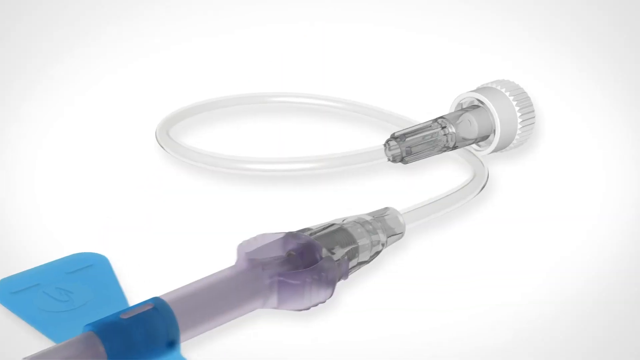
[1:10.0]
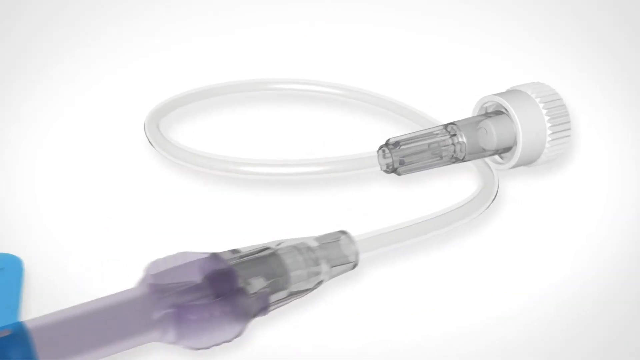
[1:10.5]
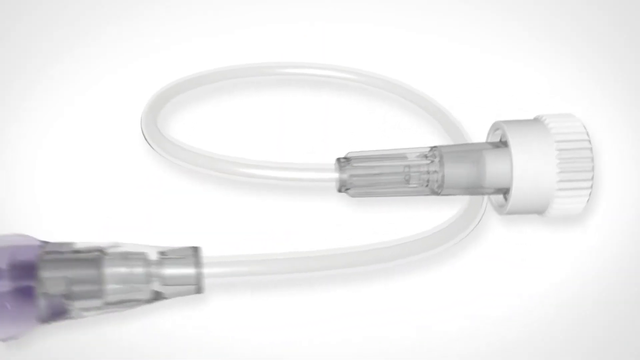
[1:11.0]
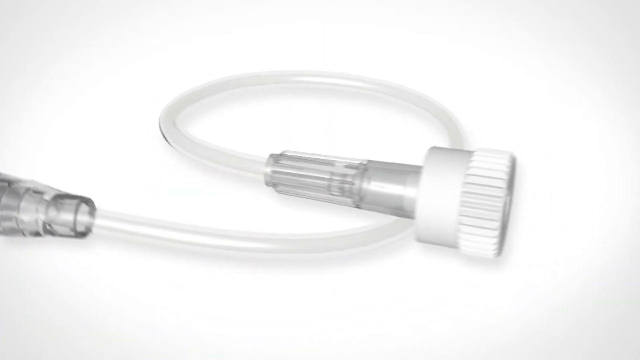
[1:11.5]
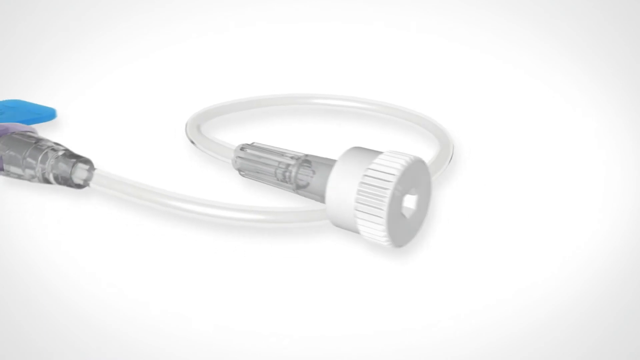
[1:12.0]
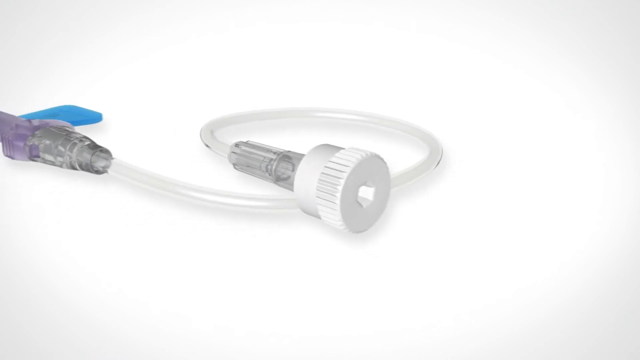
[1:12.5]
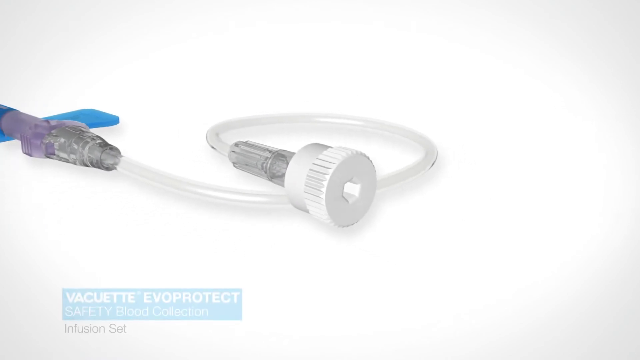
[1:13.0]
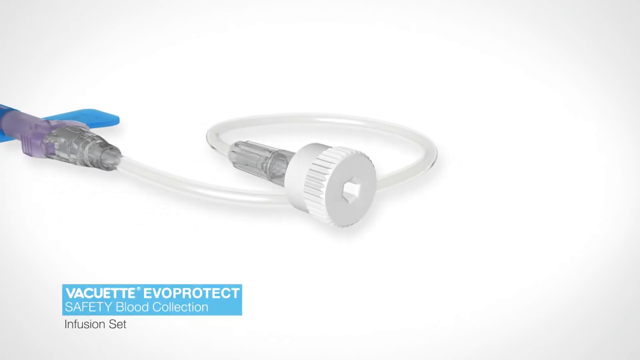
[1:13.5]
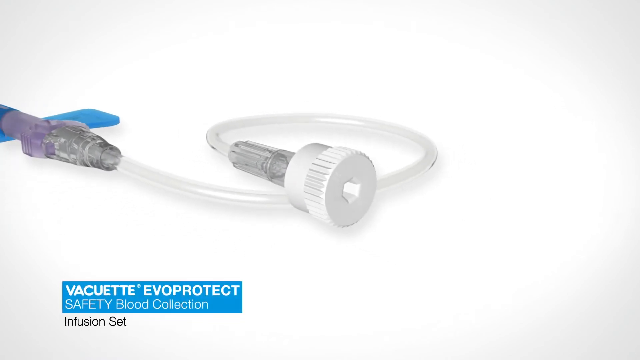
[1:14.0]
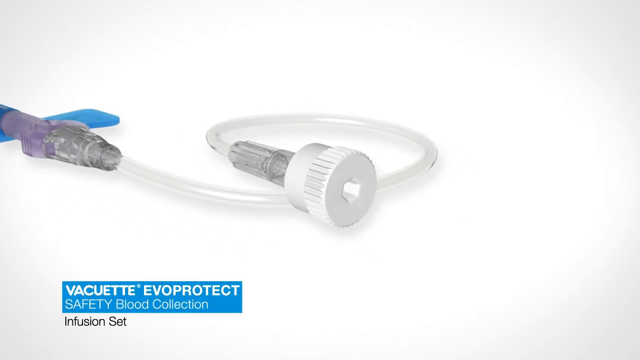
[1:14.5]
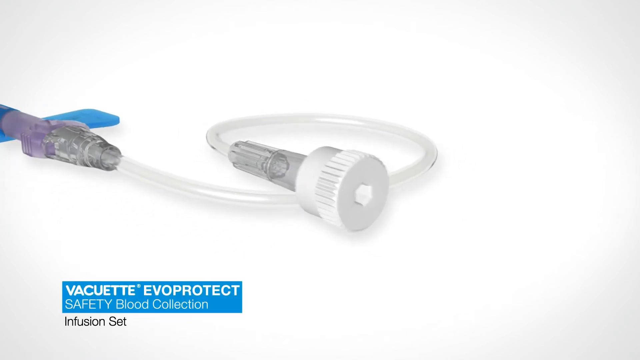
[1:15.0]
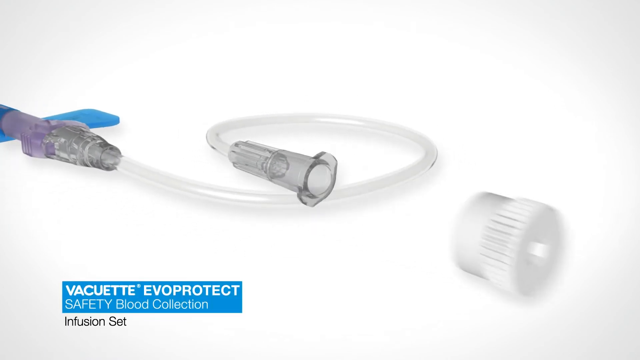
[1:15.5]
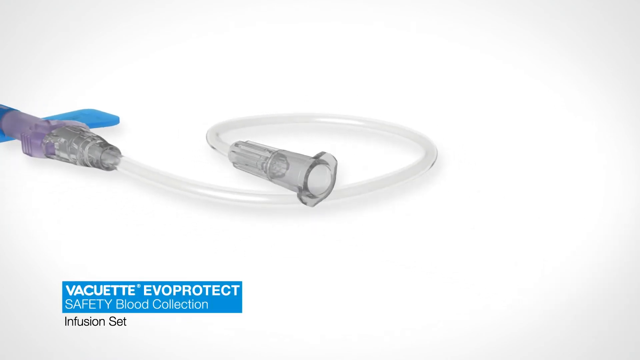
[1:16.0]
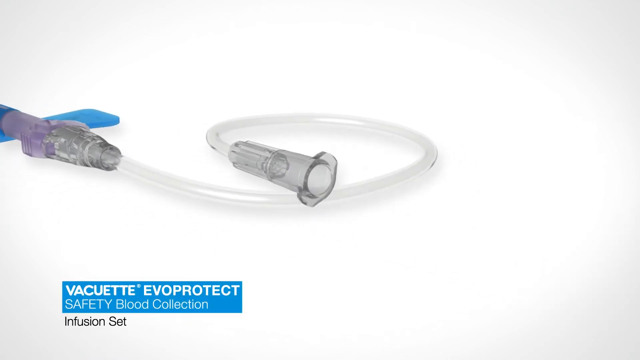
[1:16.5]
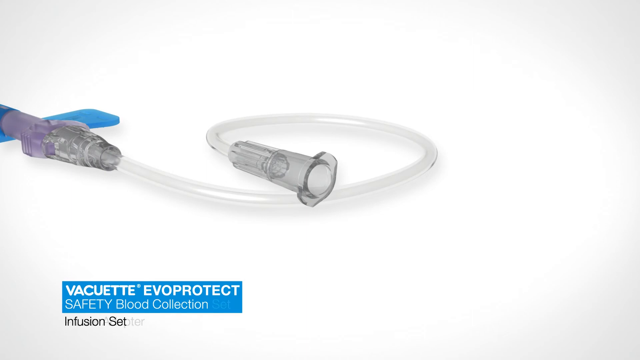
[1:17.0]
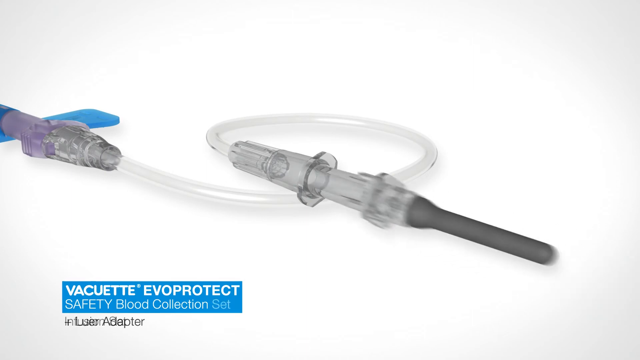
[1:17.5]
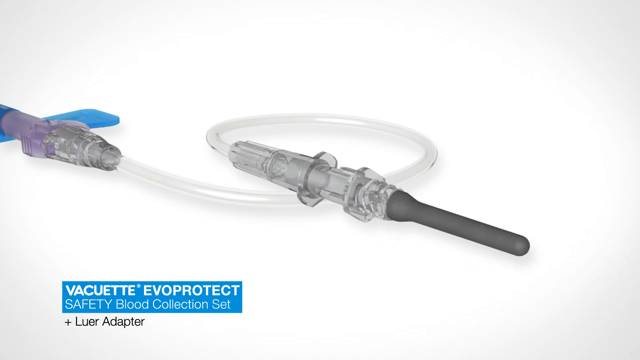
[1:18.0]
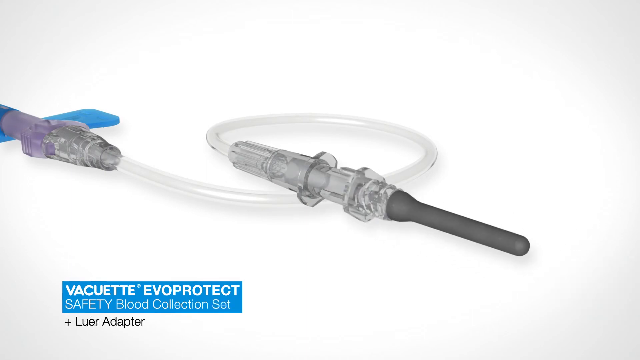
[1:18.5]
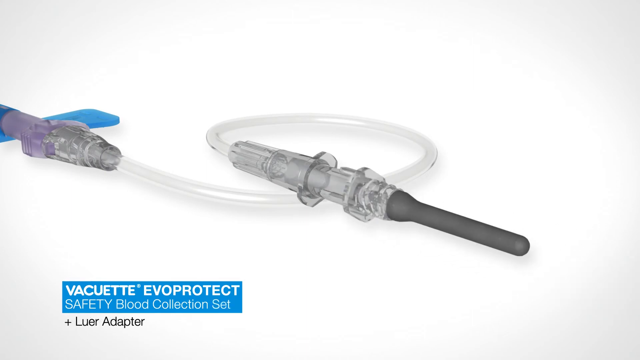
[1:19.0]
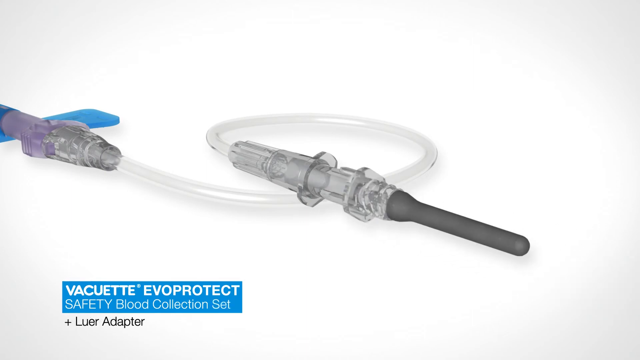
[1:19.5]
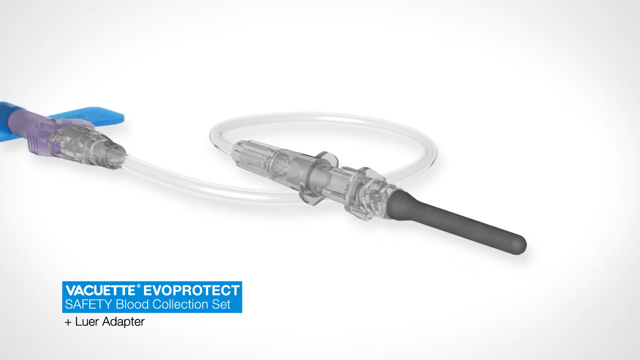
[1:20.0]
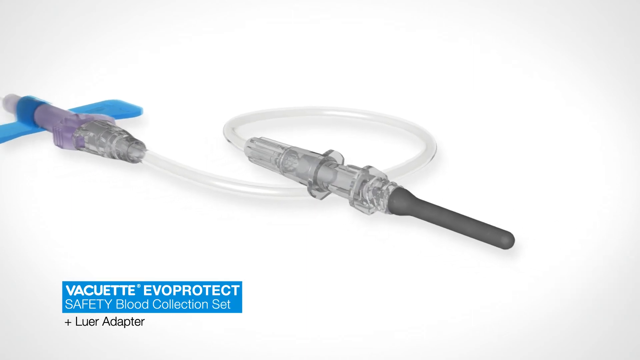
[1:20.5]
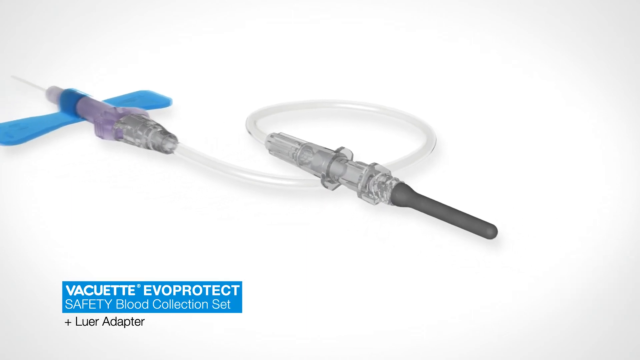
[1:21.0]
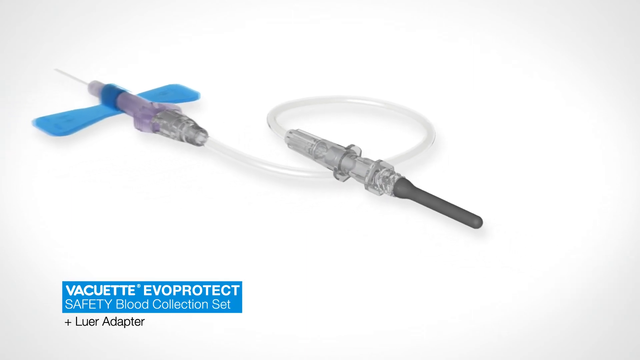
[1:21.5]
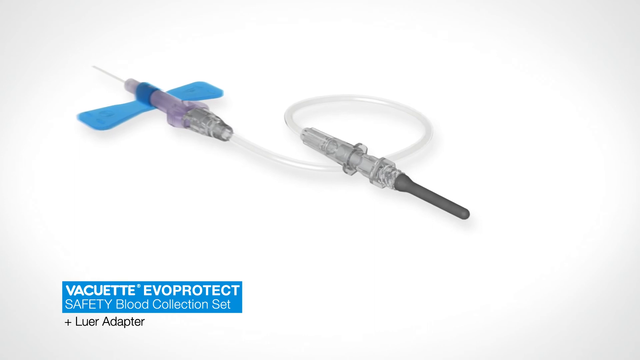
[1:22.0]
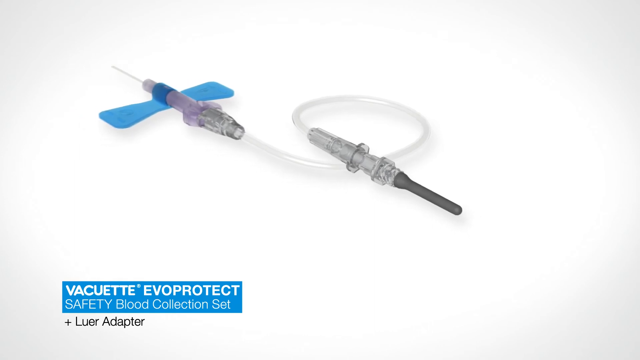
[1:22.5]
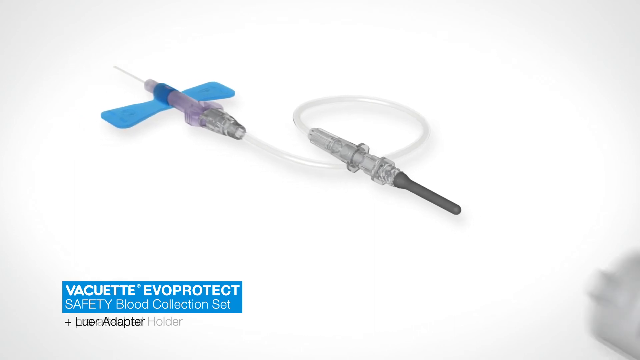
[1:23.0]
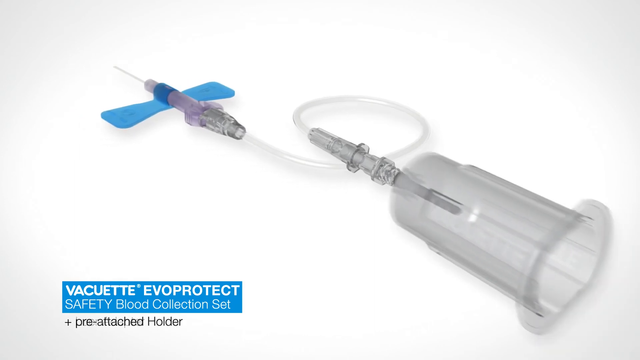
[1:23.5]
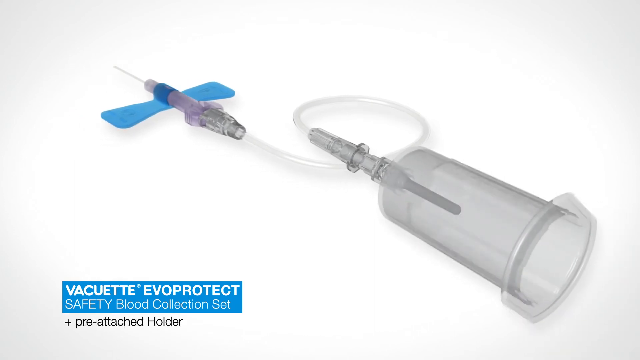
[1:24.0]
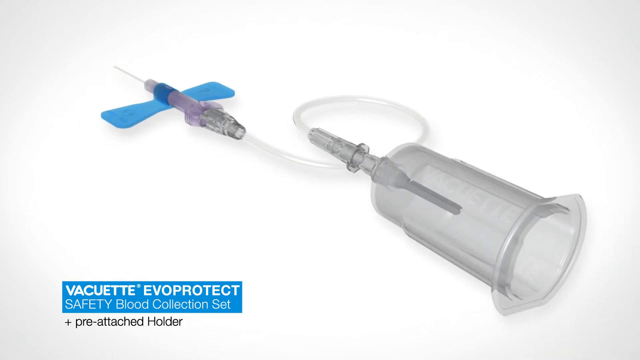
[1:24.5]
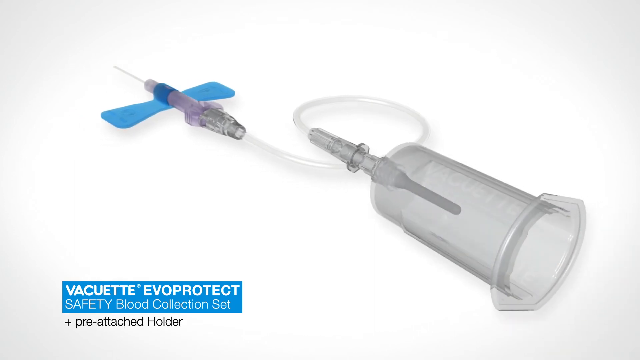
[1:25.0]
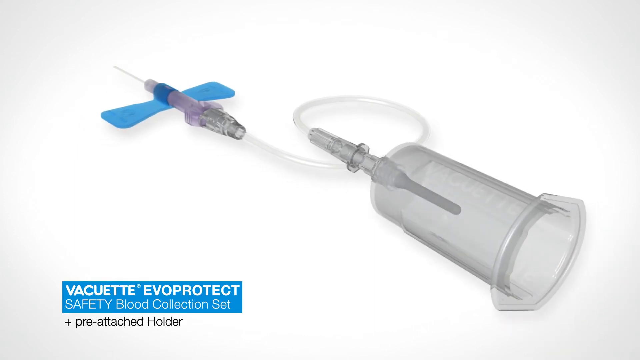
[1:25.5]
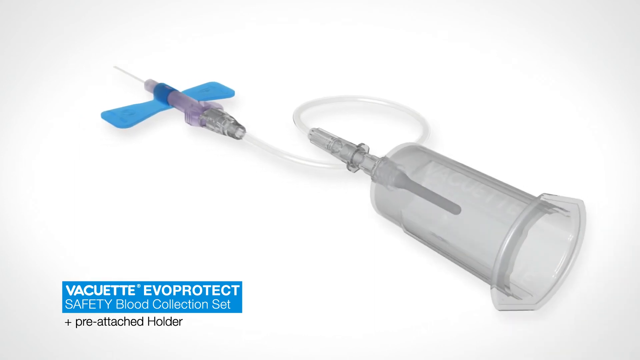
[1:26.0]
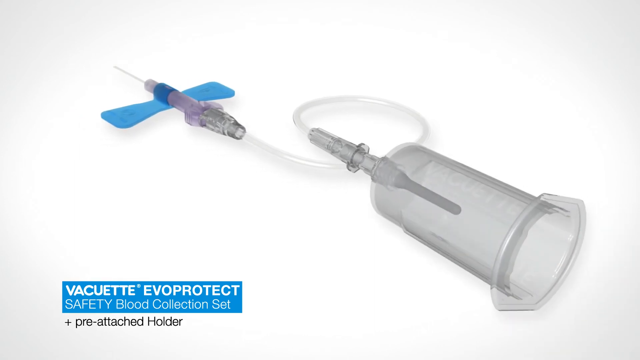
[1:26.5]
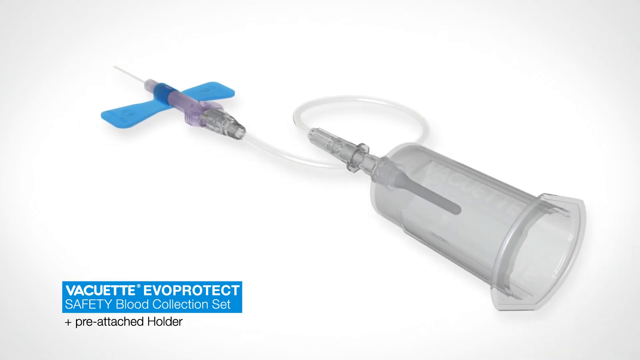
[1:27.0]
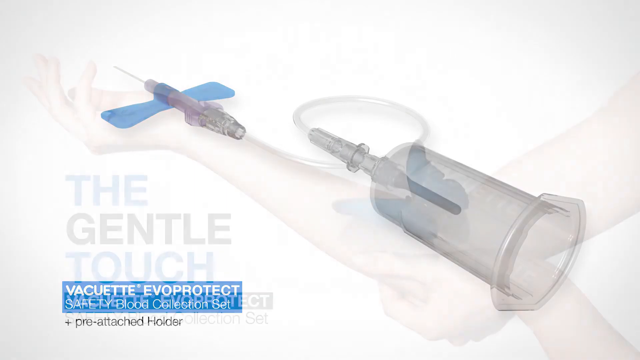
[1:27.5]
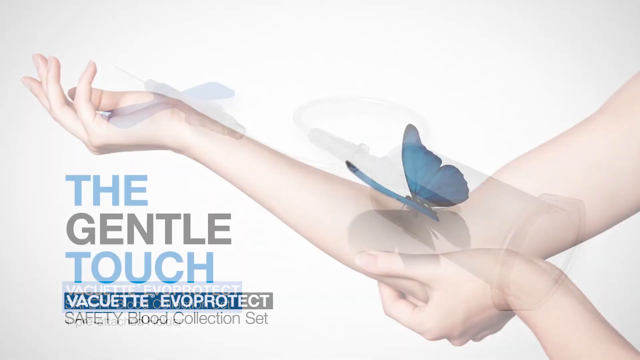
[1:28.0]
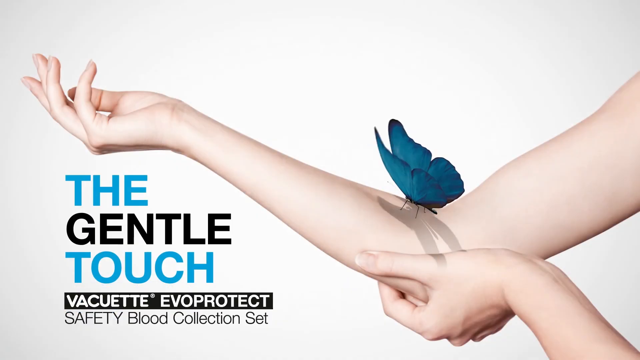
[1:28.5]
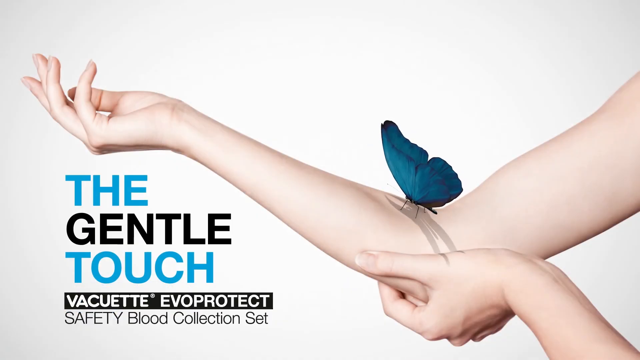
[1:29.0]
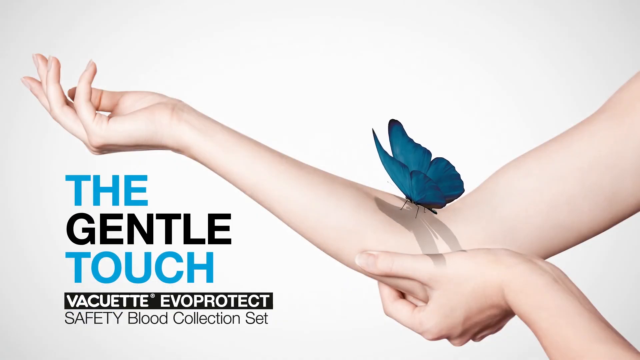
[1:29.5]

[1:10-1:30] The scene changes and the video focuses on the other end of the tubing, opposite the syringe. A caption in the bottom left corner says "Vacuette EvoProtect safety blood collection infusion set." At the very bottom of the tubing is a kind of plastic fitting, and the video shows that these fittings can be removed and switched out: the old fitting is removed and a new, elongated fitting is put in, and then something that looks like some kind of protective device is put over that fitting. Finally, the graphic goes back to the original one of the human arm with the butterfly flapping its wings on the elbow and the caption "the gentle touch Vacuette EvoProtect safety blood collection set."